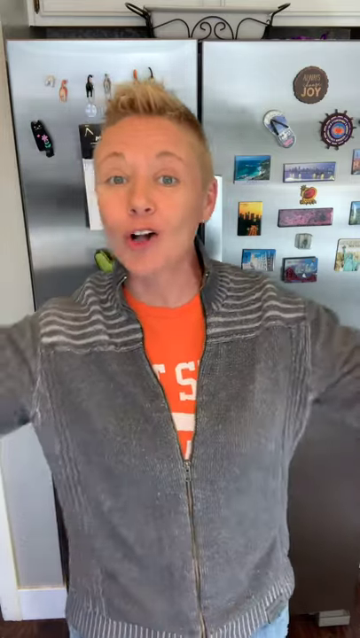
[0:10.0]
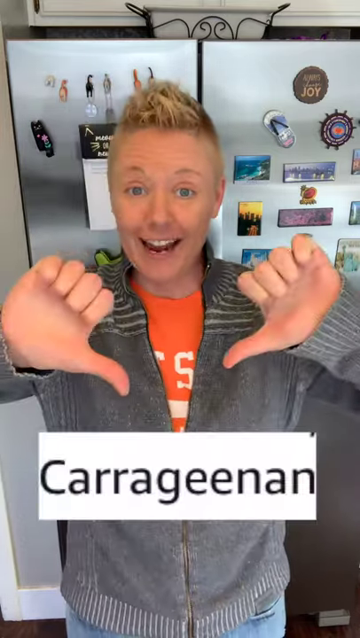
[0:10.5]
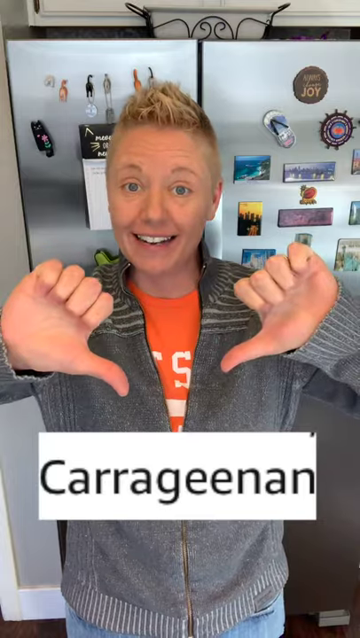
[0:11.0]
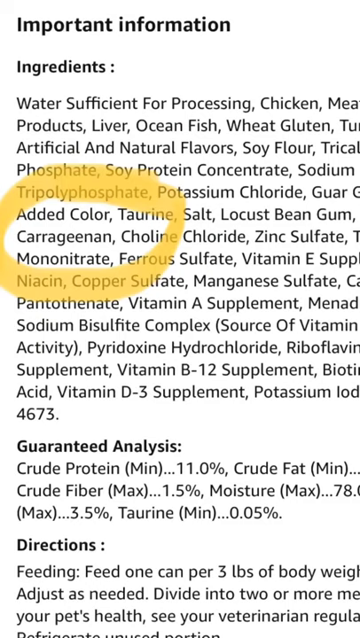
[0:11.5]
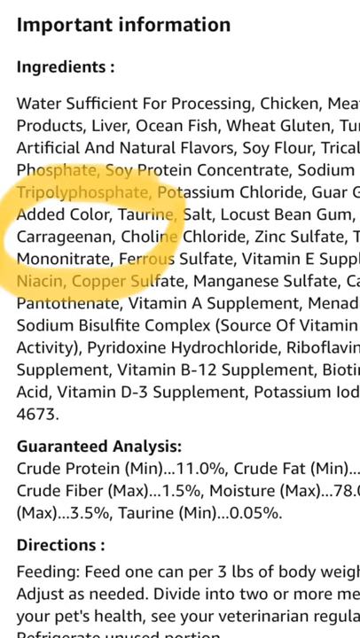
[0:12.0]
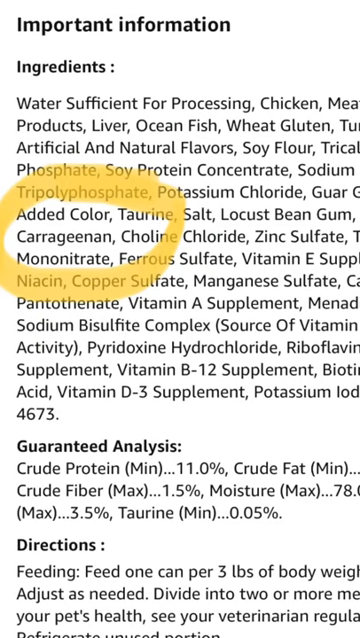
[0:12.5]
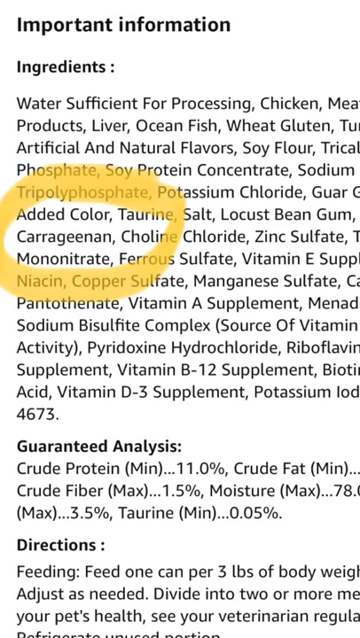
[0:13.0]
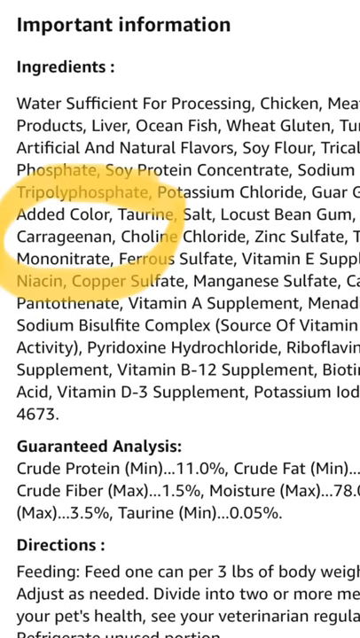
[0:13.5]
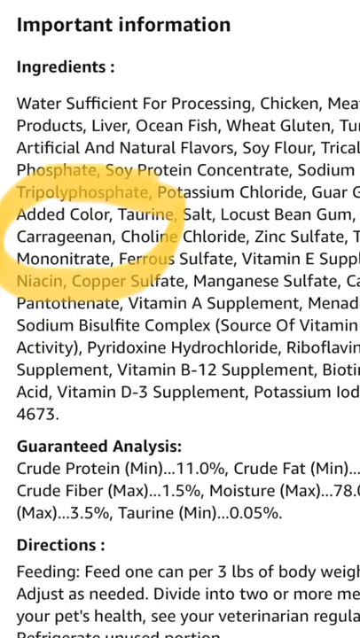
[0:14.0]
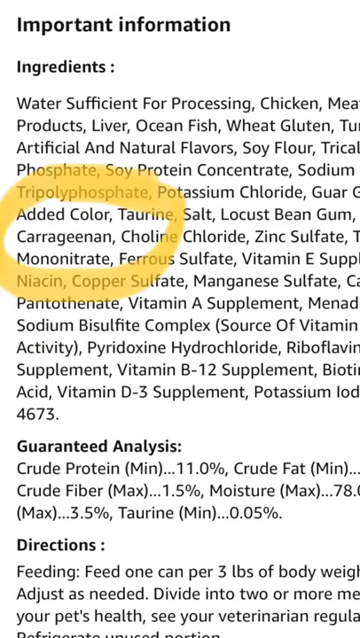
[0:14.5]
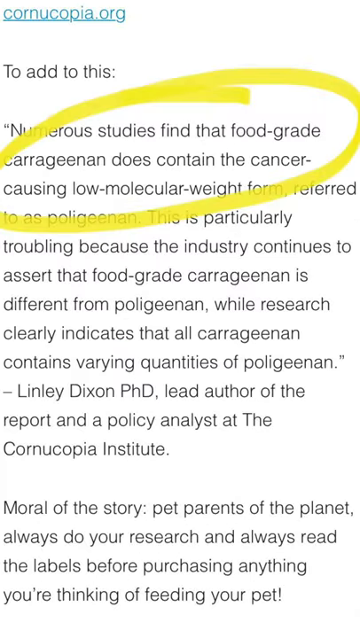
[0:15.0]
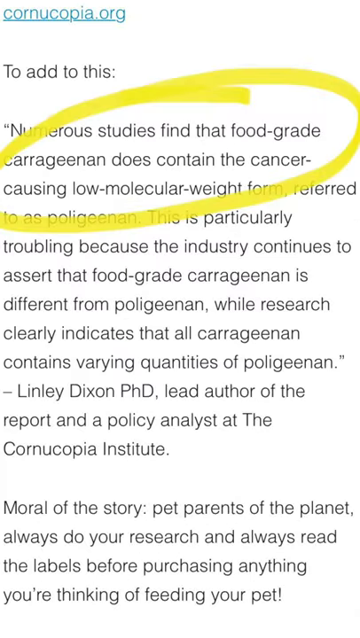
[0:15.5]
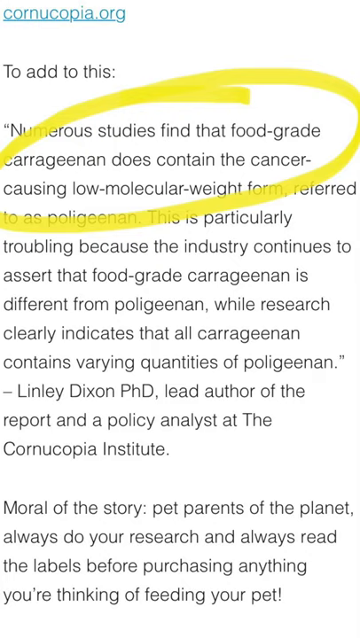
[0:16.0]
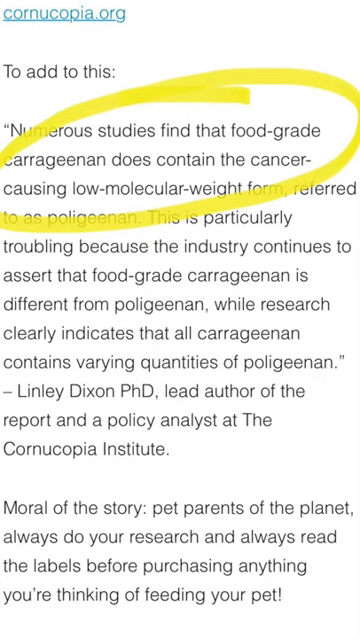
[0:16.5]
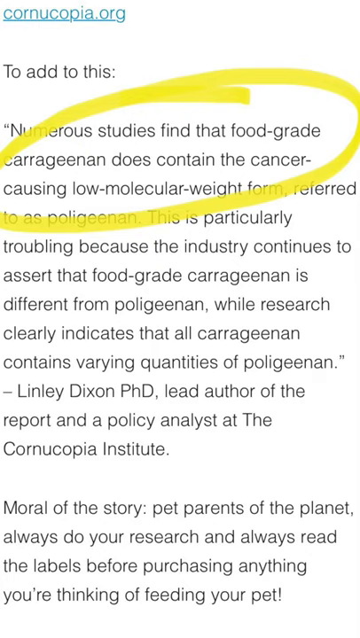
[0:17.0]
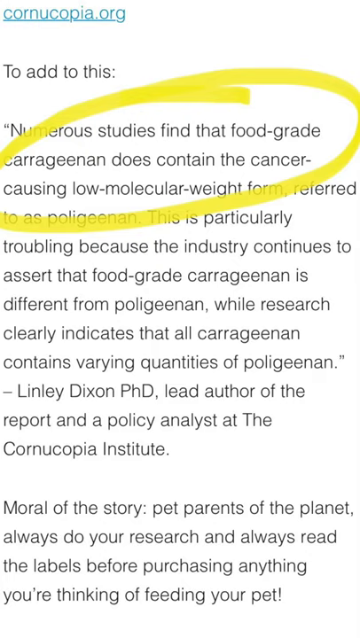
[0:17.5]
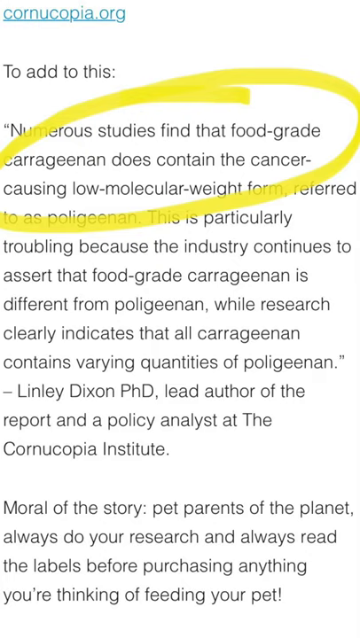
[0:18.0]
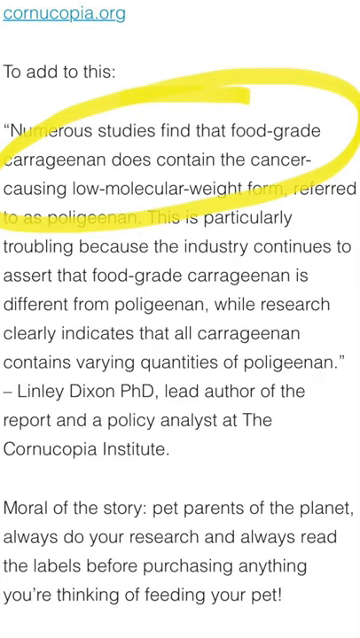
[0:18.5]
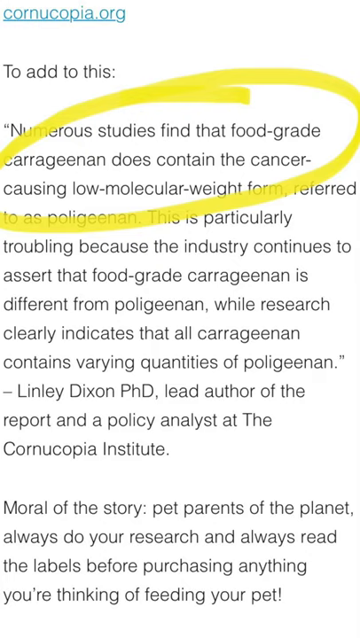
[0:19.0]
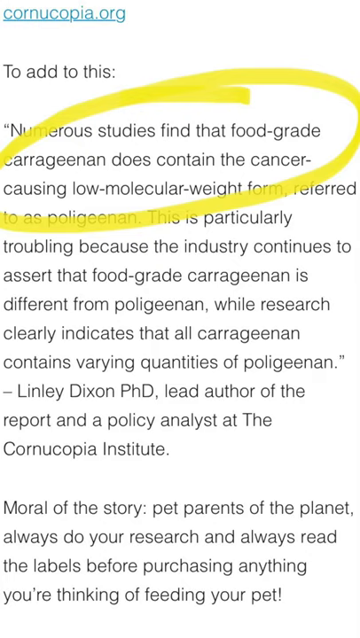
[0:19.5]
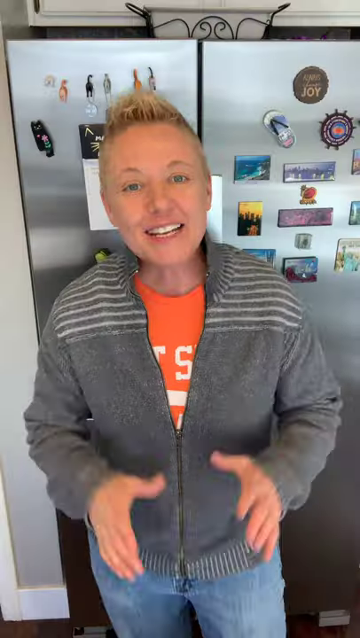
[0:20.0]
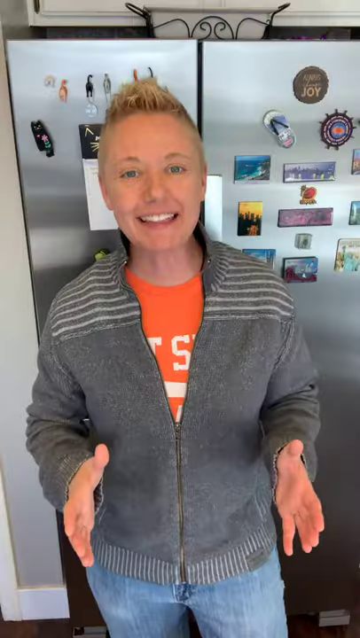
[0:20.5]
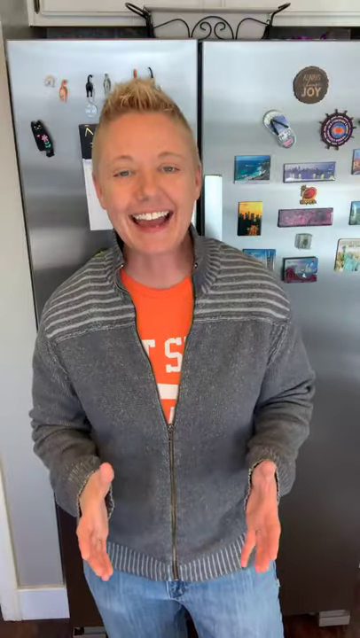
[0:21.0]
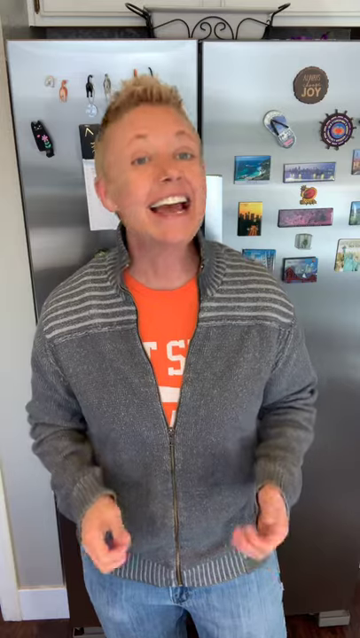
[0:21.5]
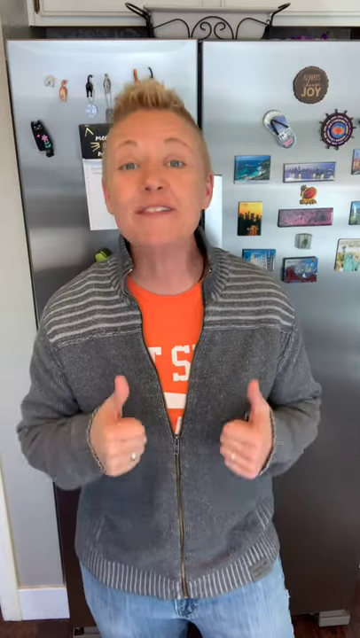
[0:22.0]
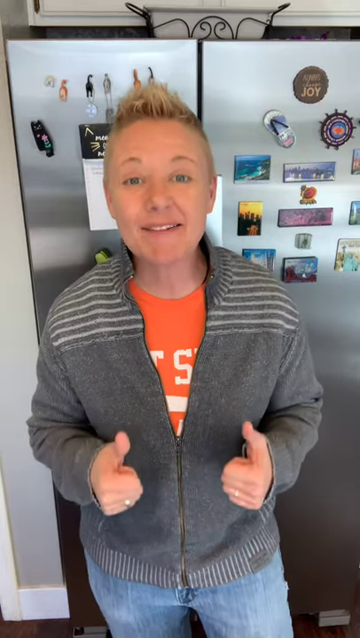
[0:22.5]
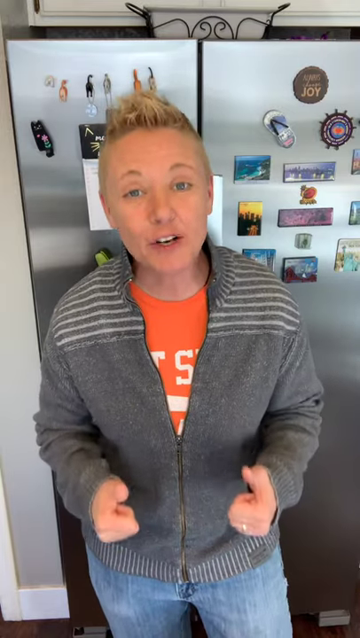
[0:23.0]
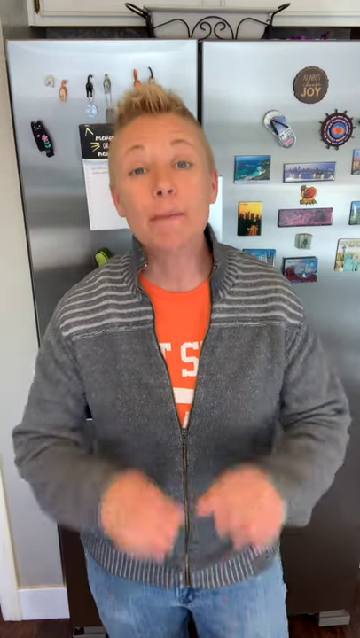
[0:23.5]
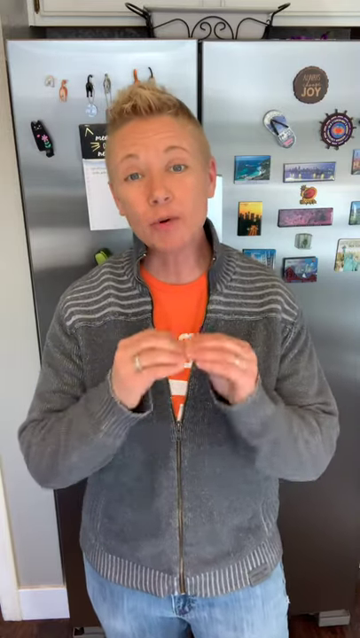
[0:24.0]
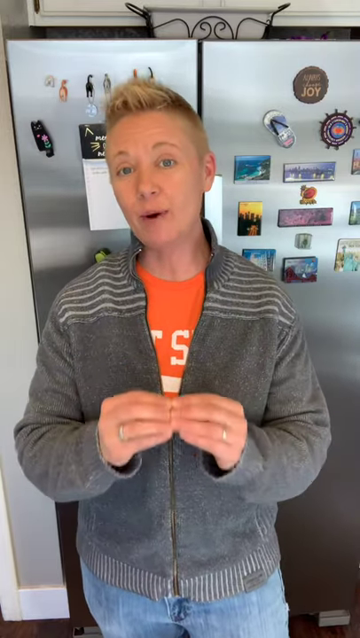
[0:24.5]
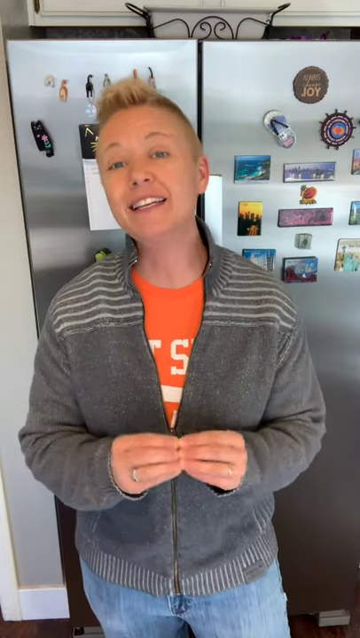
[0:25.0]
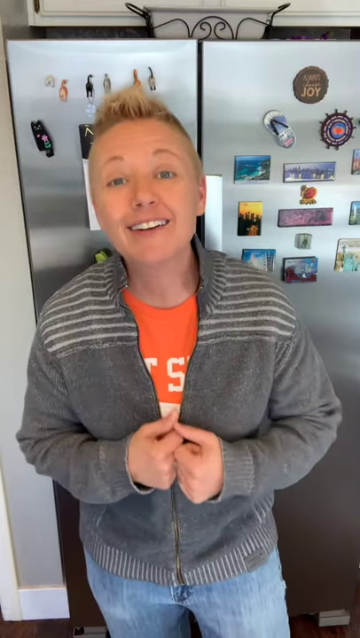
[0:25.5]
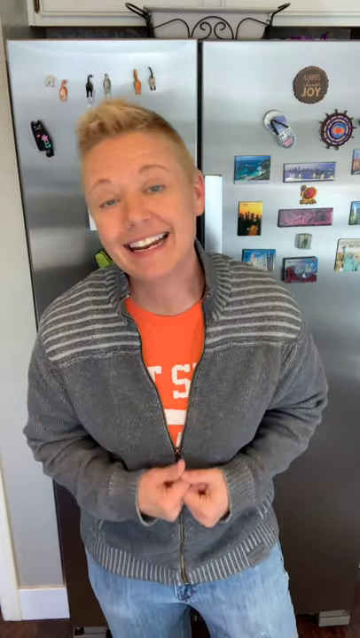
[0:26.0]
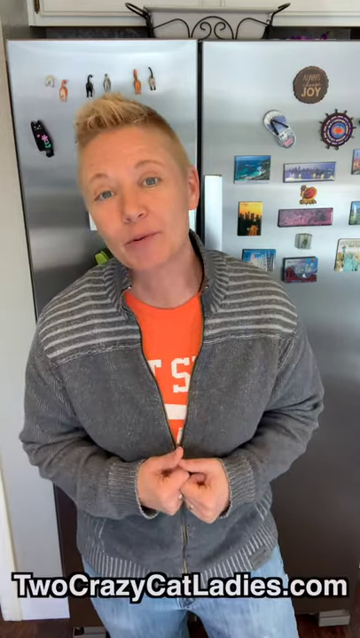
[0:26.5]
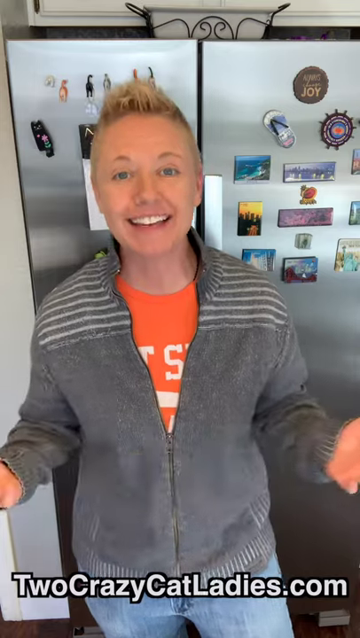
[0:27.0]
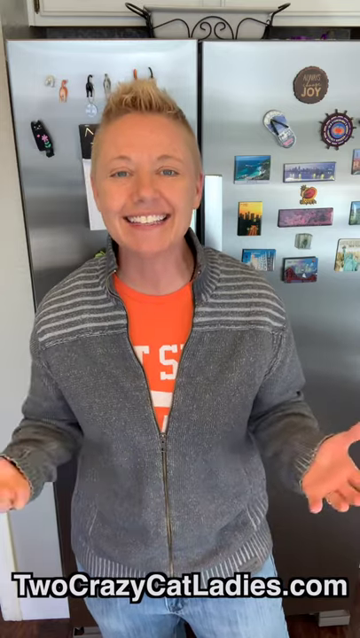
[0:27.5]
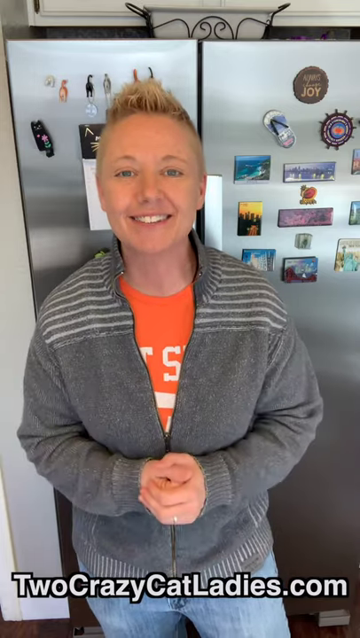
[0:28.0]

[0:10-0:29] The woman holds out both her right and left arms and gives a thumbs down, pointing at a word that pops up in the middle center of the screen: a white rectangle with black text reading "carrageenan". Text notes that it is listed as an ingredient in most cat food, with further wording beginning "studies find that food grade does contain cancer causing" and describing it as "particularly troubling because the industry continues to assert that it's safe." The video seems to be made for social media to advocate for pet health and safety. The woman gestures with her hands close to her chest and then close together, seemingly trying to get the viewer's attention. Text at the very bottom reads "2crazycatladies.com".